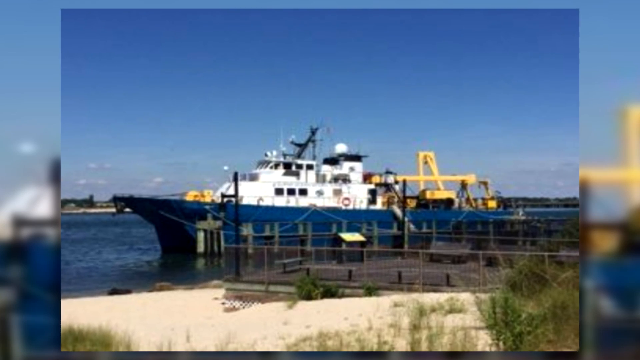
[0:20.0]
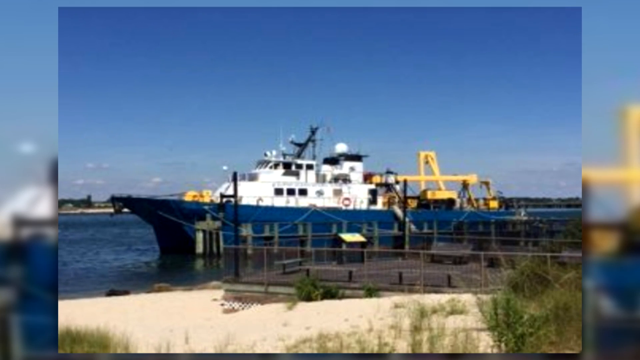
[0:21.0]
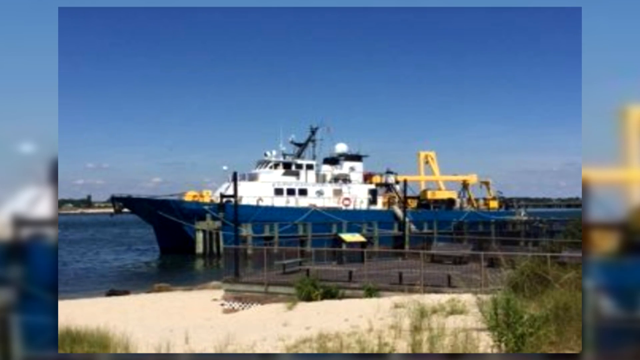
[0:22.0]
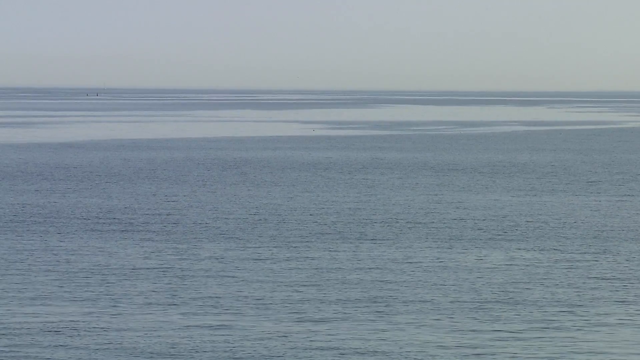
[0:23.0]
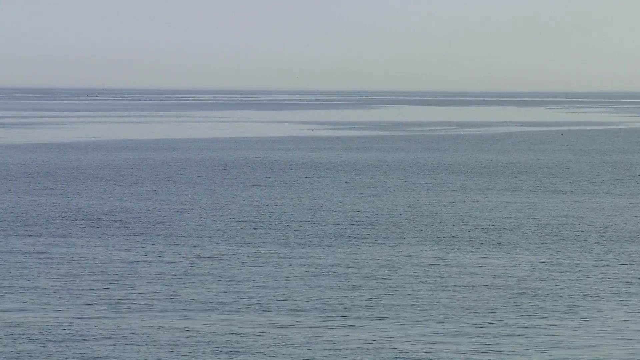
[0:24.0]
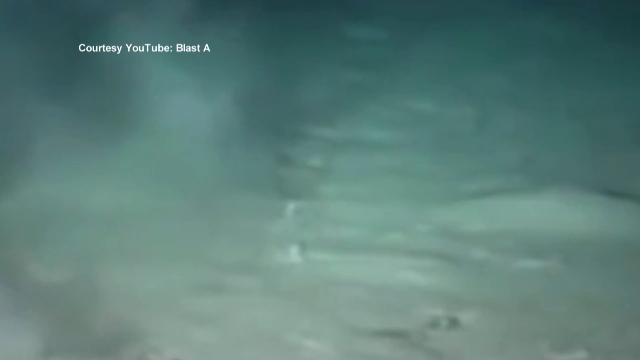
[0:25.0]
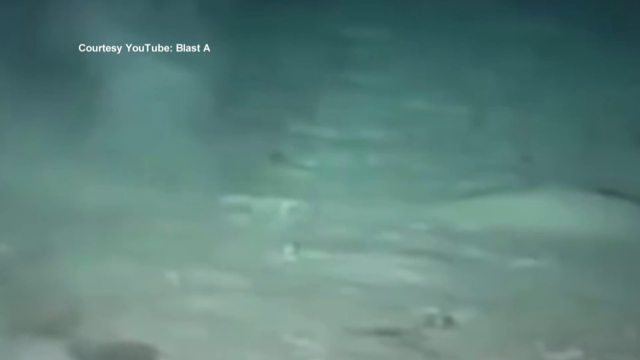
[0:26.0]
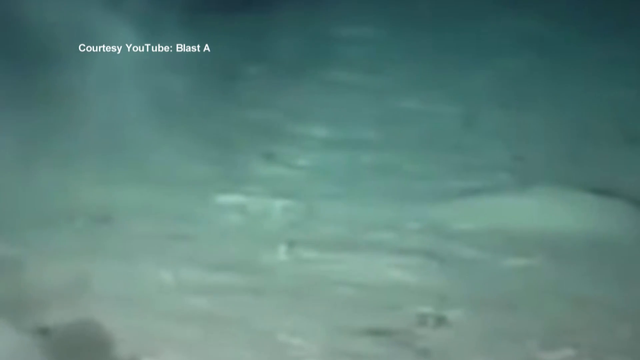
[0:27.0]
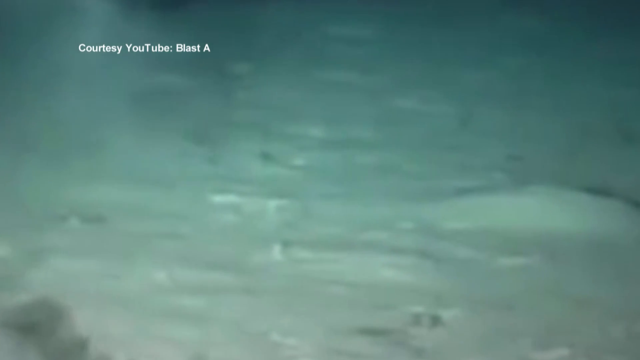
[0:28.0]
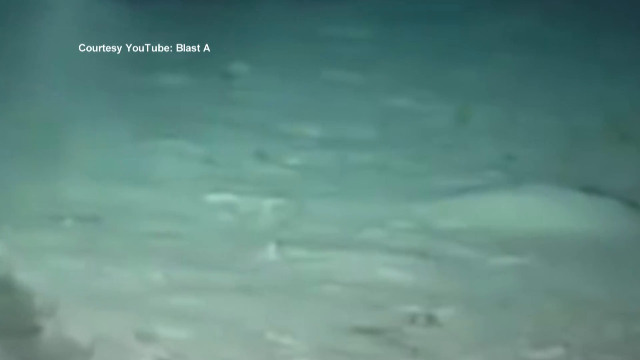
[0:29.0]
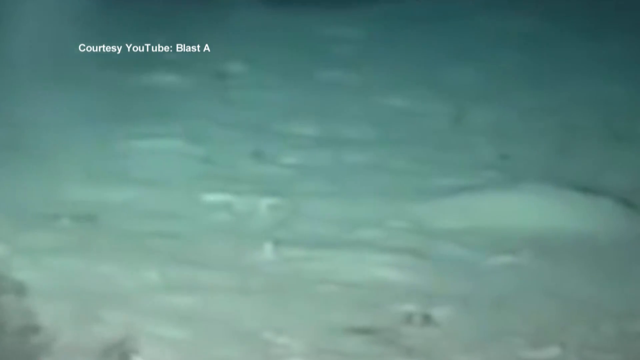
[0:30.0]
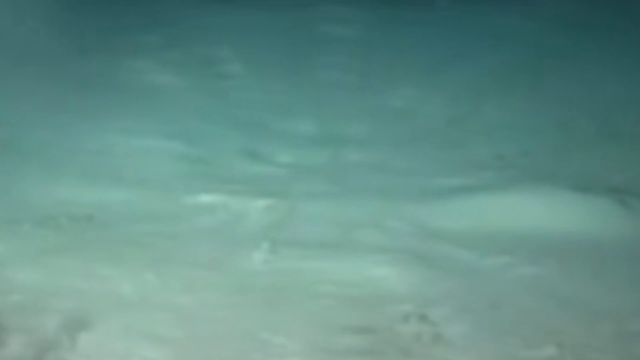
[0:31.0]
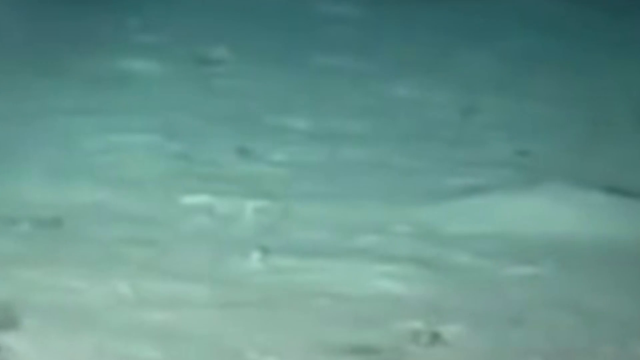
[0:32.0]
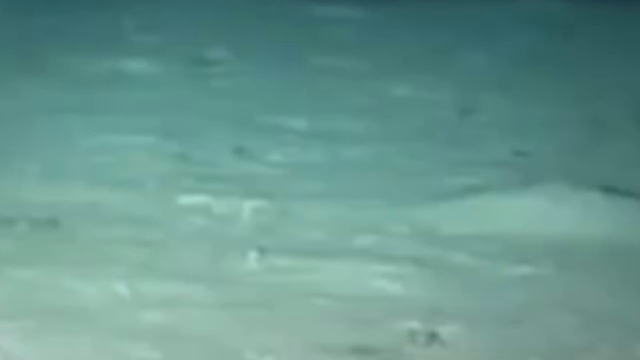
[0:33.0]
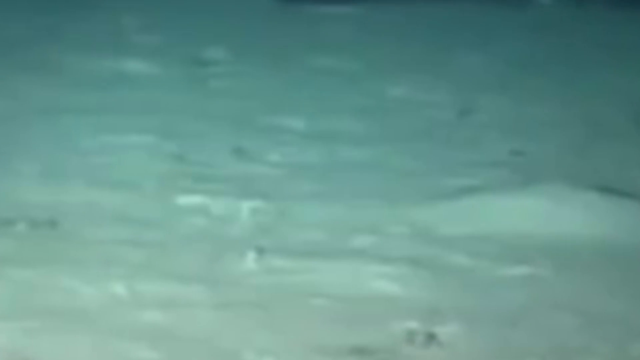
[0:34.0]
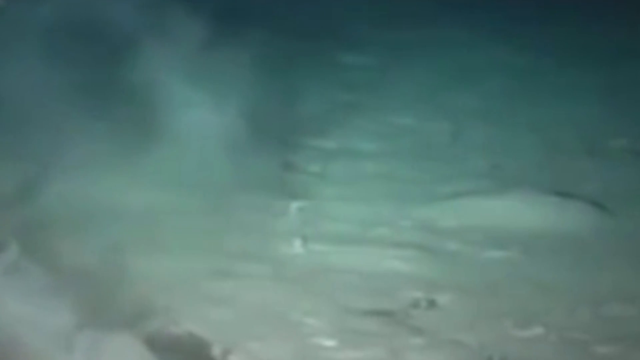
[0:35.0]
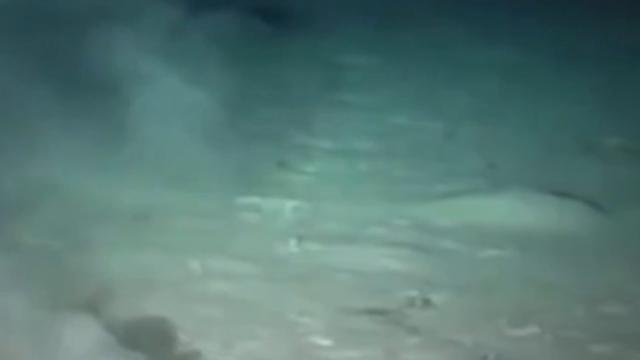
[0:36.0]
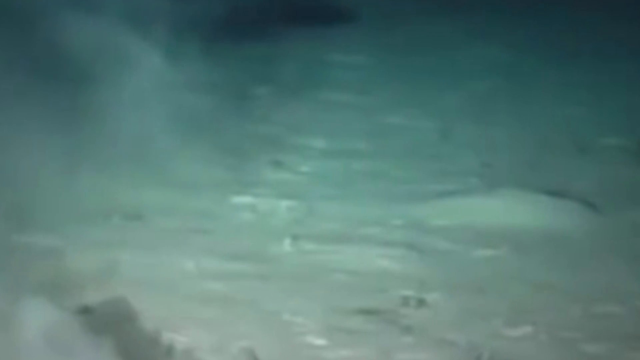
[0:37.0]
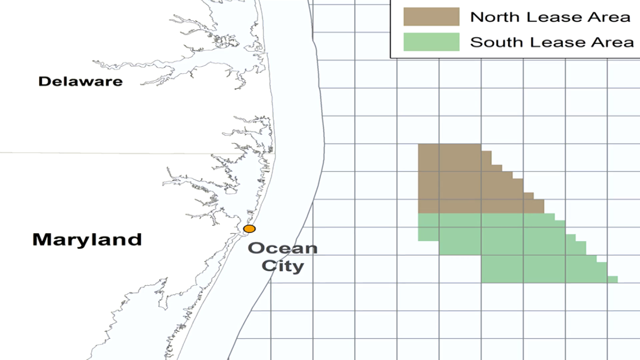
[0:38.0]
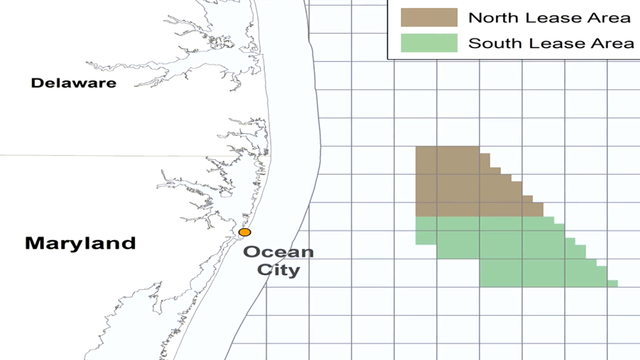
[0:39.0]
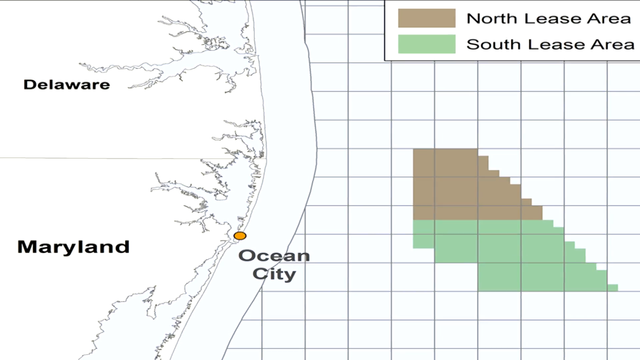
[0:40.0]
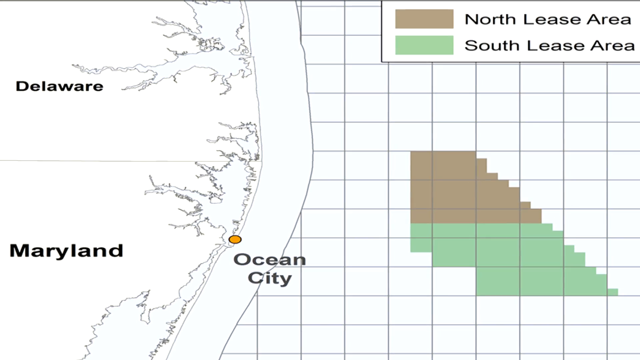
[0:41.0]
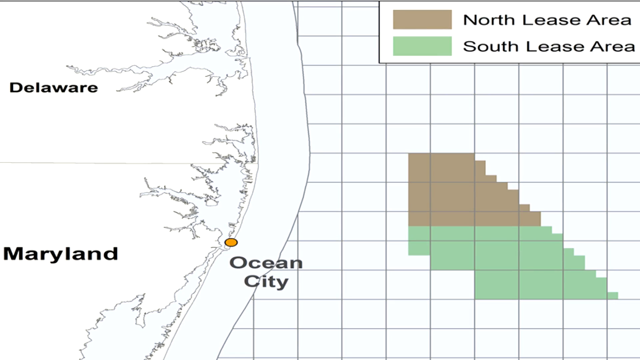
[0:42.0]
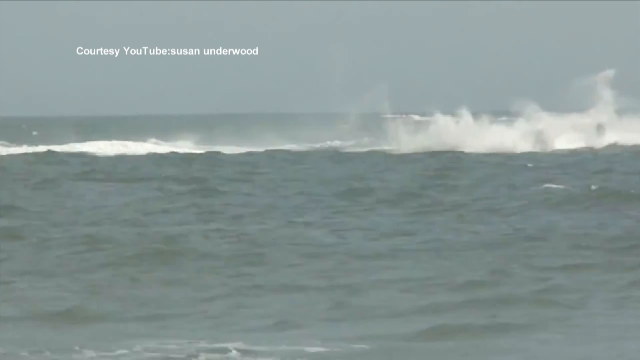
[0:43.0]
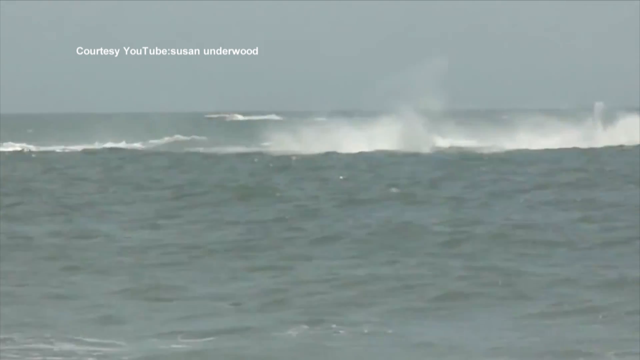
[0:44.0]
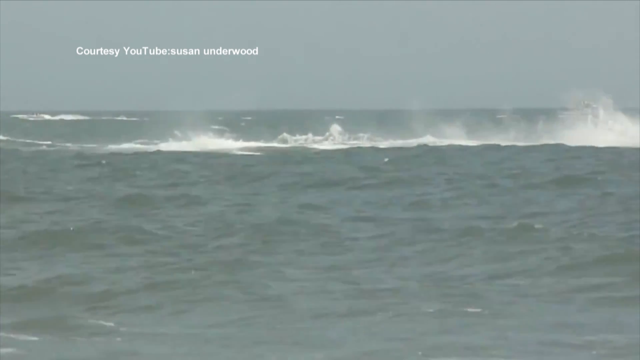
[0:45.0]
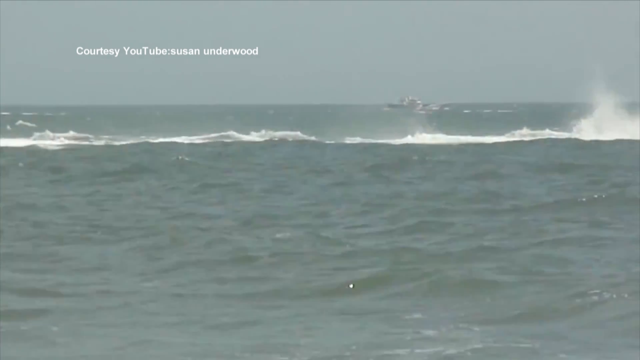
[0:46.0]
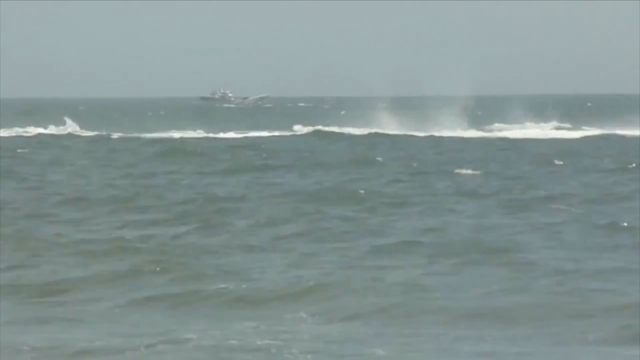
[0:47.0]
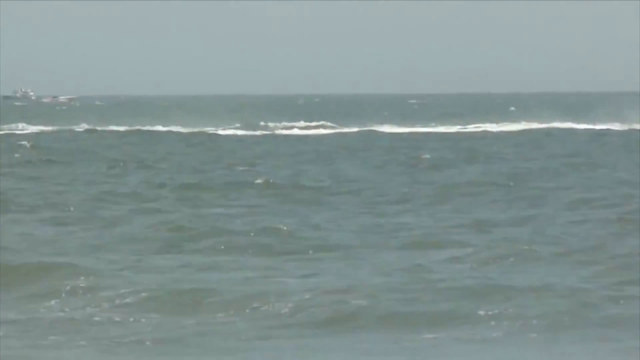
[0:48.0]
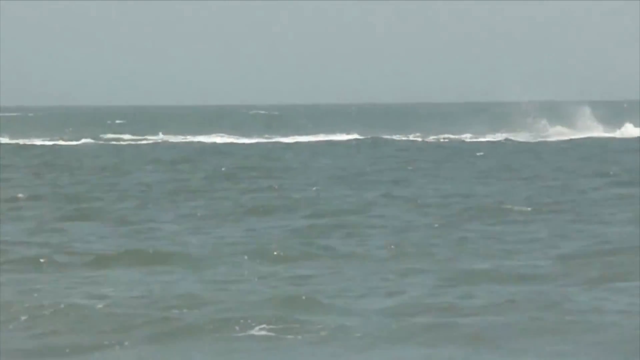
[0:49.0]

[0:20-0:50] Footage shows a blue and white boat with a yellow device, possibly a crane, on its rear, moored at a dock. The footage transitions to a stretch of water that is relatively calm but a little choppier in the foreground than in the middle, where it looks very still. Then comes what looks like undersea footage, with small writing in the top left reading "courtesy YouTube". This is replaced by a map showing Delaware and Maryland on the left-hand side. In the centre is an area marked with an orange circle called Ocean City. The right of the map consists of a series of square grids; one area is marked in brown as the North Leash area, and the area beneath it is marked in green as the South Leash area. The video then zooms in on choppy waves out at sea, and white text appears reading "courtesy YouTube, Susan Underwood".